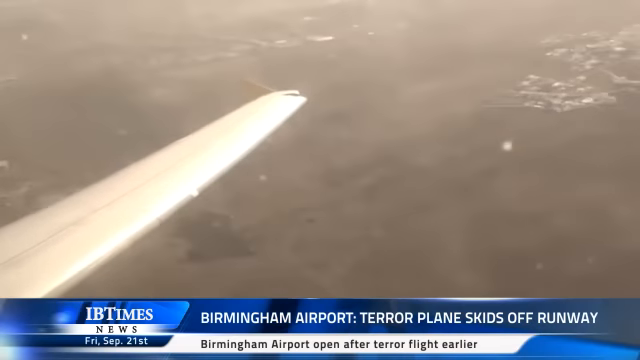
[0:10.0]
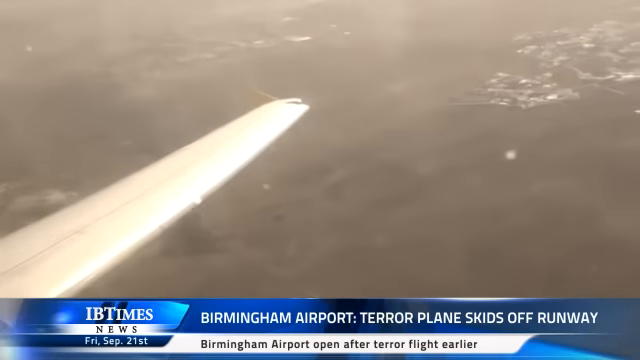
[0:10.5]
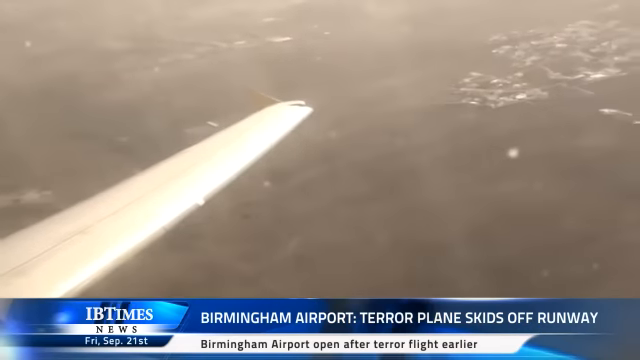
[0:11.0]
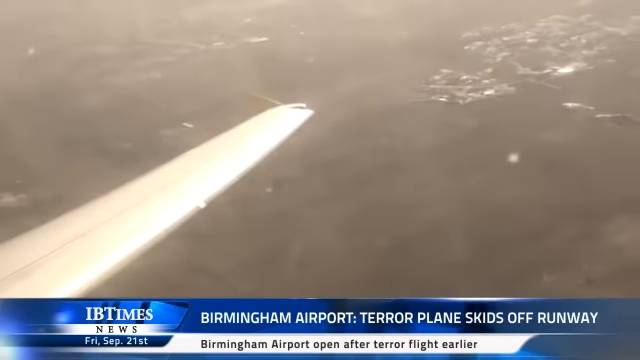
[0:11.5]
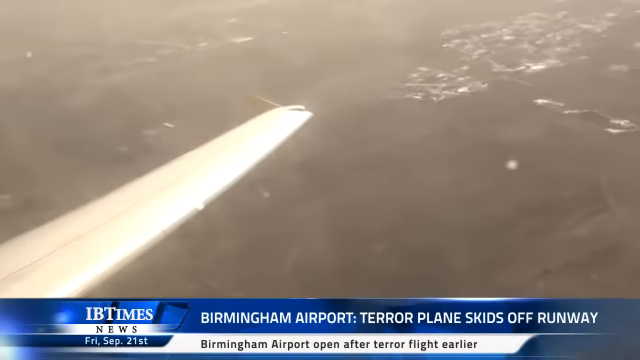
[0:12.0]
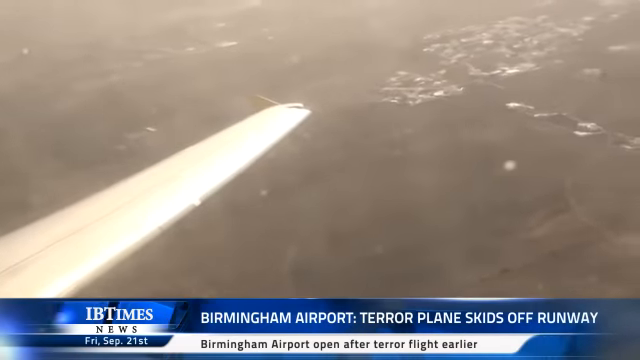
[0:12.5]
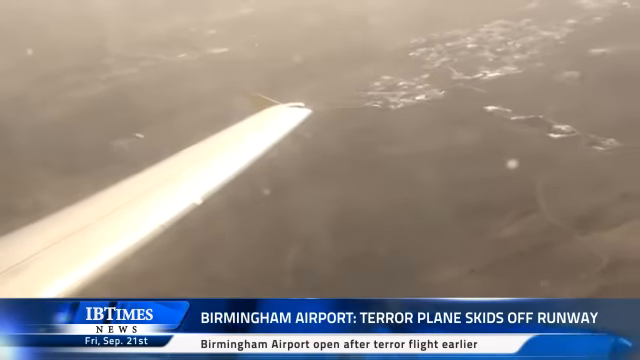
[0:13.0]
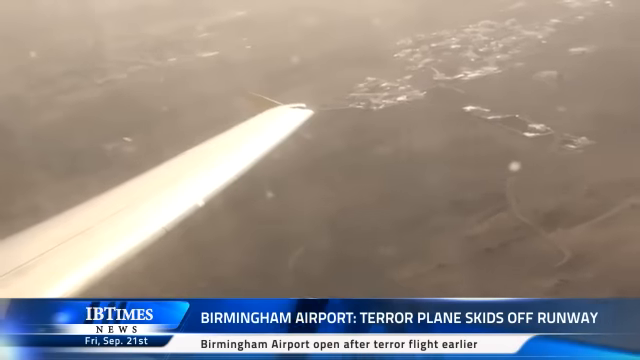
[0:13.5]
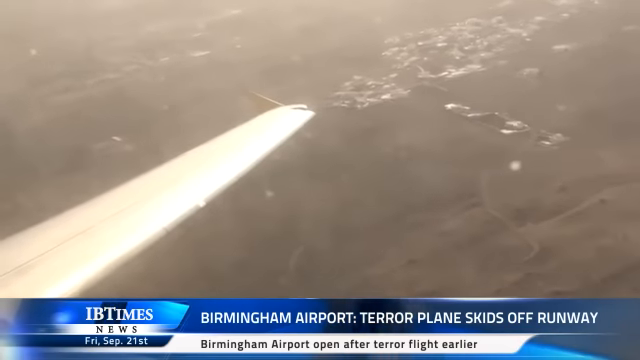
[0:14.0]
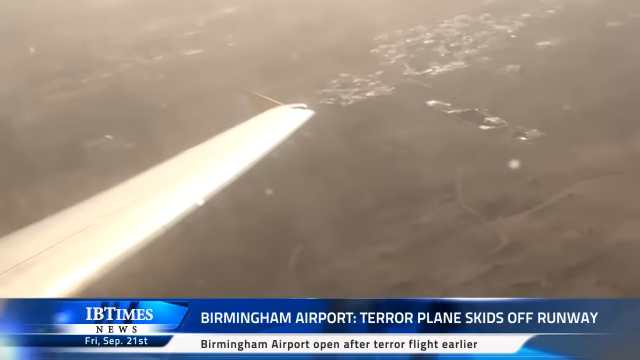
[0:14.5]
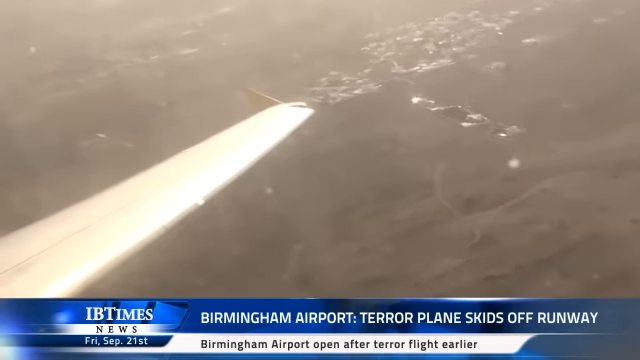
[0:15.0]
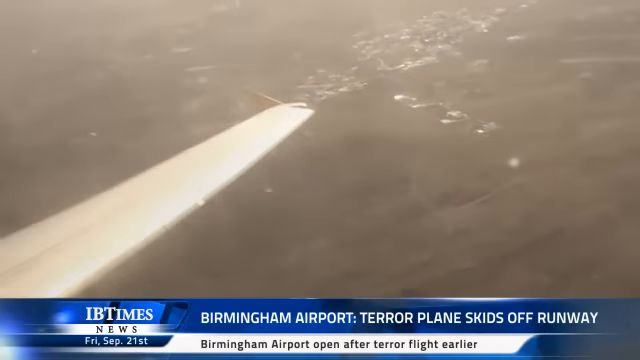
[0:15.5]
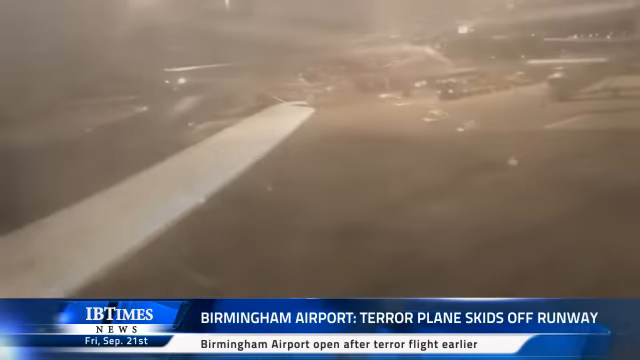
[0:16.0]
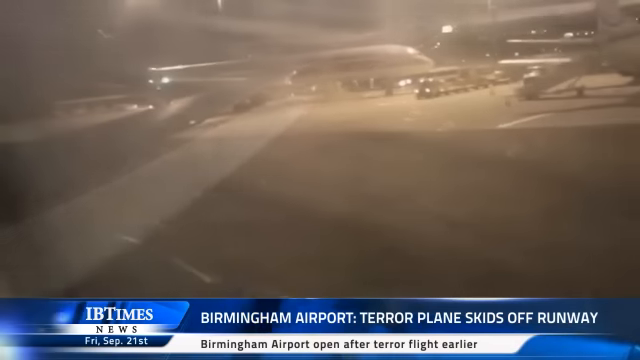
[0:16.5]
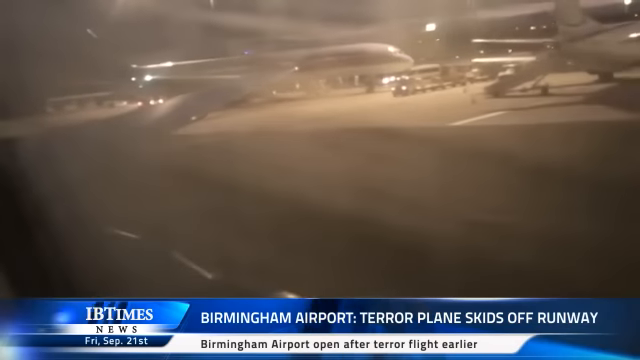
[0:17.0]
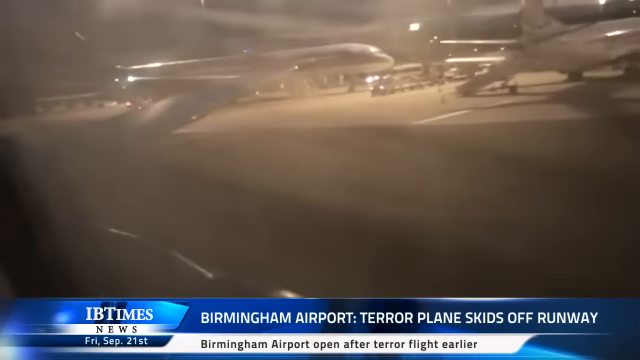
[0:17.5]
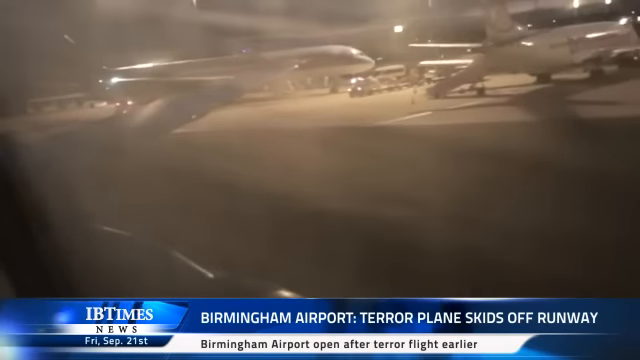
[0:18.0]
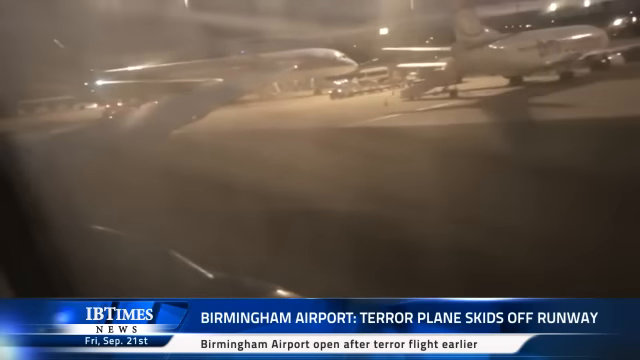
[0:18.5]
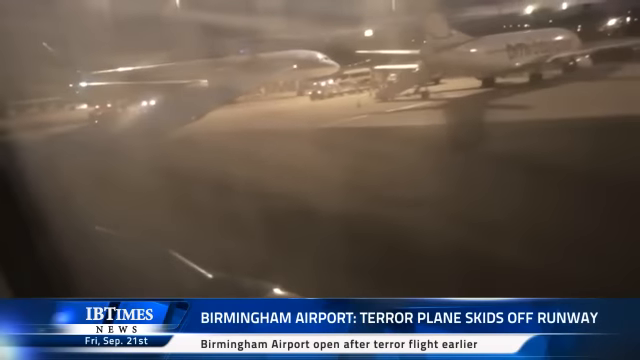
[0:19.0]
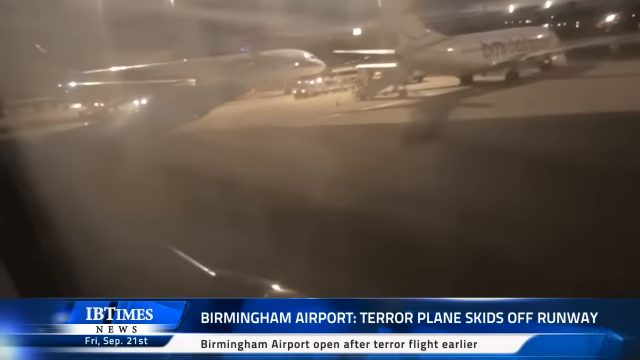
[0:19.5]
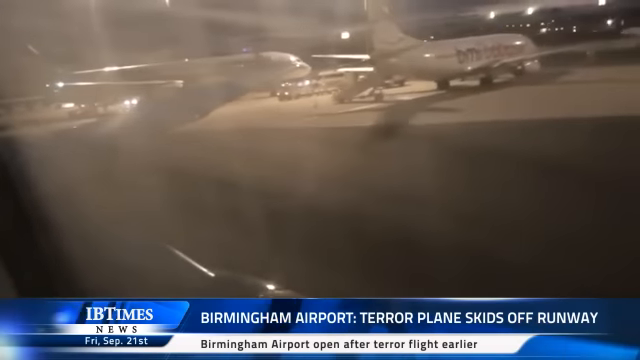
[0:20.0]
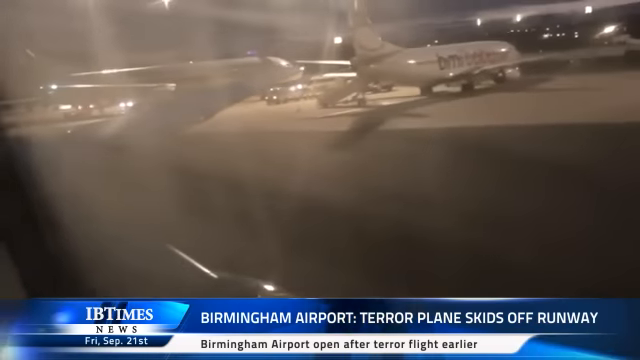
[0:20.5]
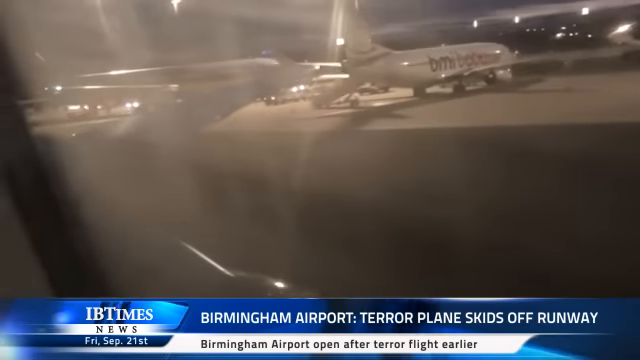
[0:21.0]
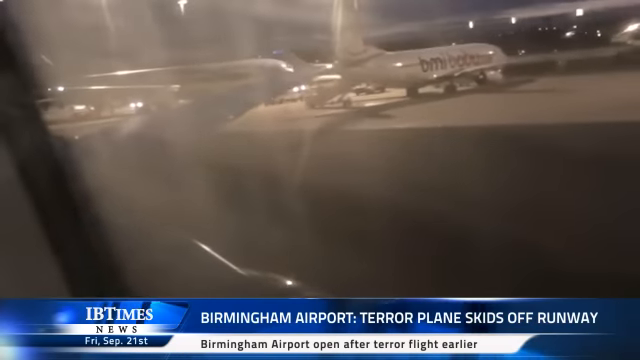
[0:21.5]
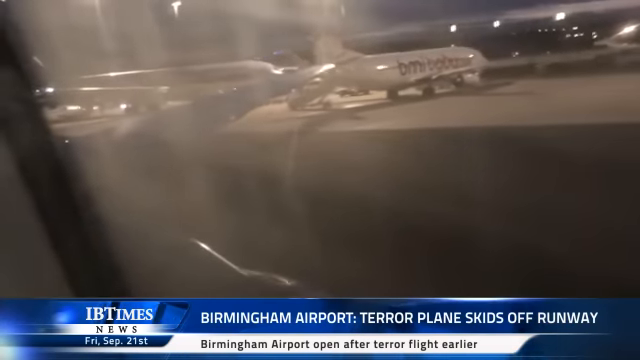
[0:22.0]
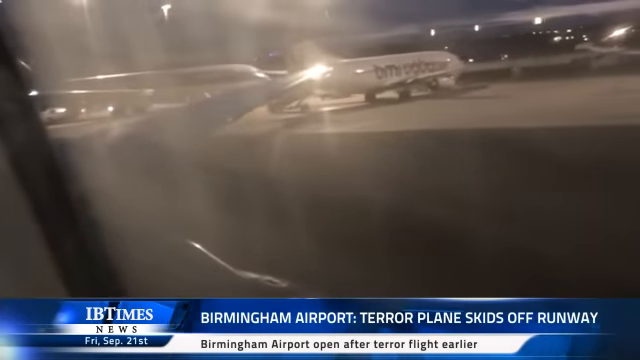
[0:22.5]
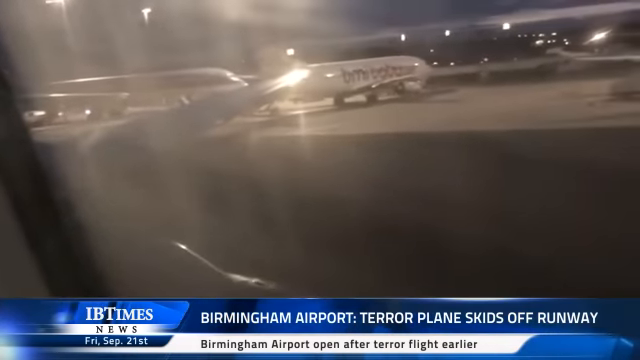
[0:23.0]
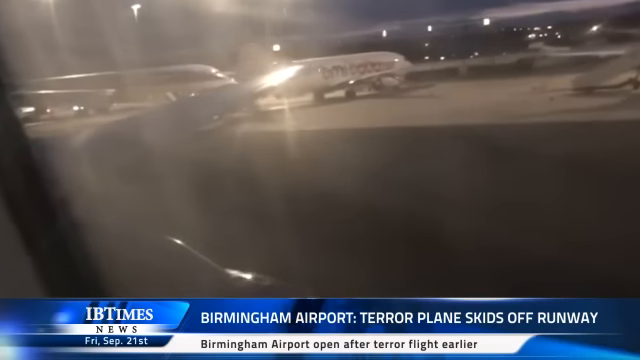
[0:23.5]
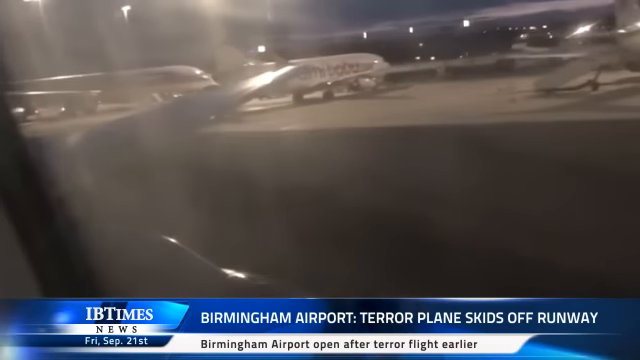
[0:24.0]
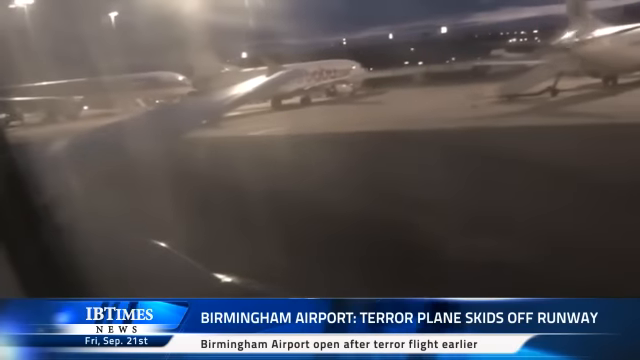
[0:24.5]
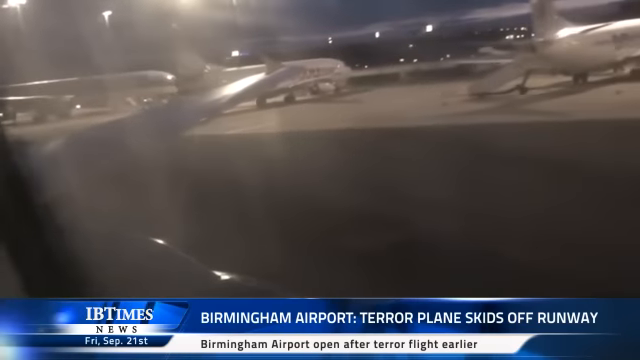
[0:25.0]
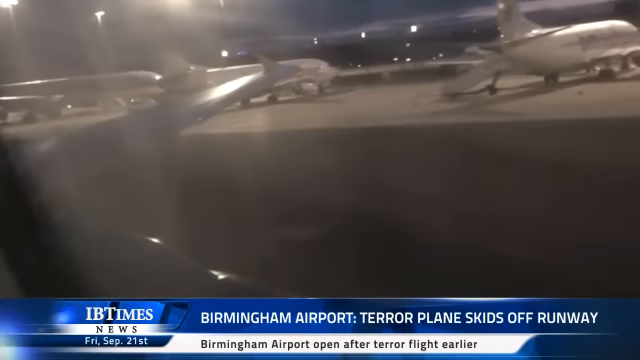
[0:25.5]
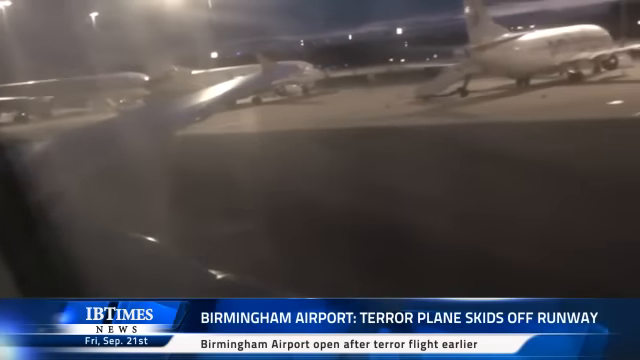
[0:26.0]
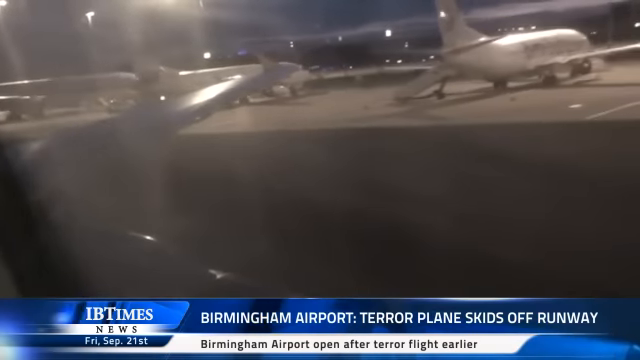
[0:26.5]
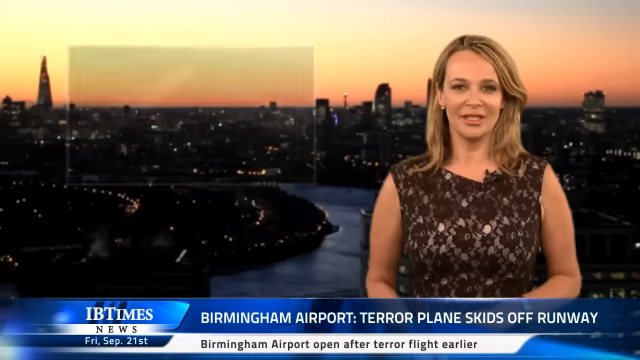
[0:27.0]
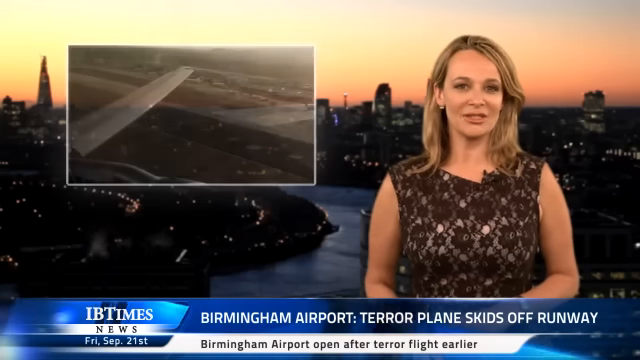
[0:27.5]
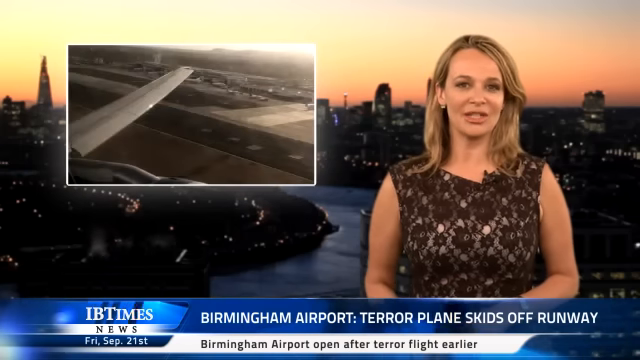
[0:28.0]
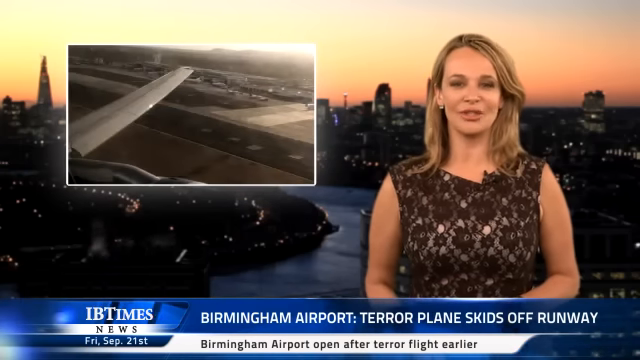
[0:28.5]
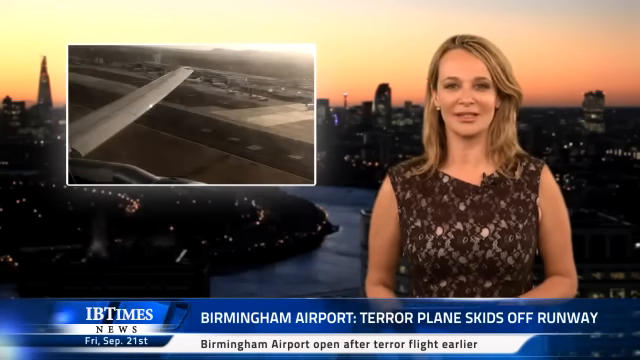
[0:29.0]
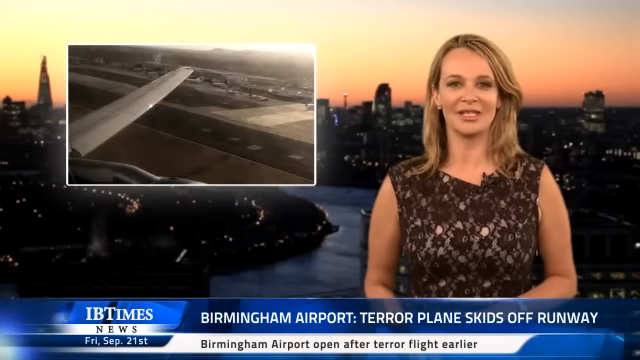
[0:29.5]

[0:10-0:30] An airplane wing is seen flying high in the sky over land below. The land below turns into a city area, and the airplane is then taxiing across a runway. Other airplanes are parked off the runway or the jetway, off to the side of the airport area. A passenger films out of a window as the jet taxis along the jetway, with the other airplanes parked on it. The shot switches to the newscaster, who talks on the right side of the screen. She has sandy blonde hair that goes down past her shoulders, wears a dark brown dress, and looks directly at the camera as she gives her report. The image on the left of the screen appears to show the plane flying through the air: the wing of the plane is up in the air, and below it, off to the left, the airport is visible down below, so it looks like the airplane is approaching the airport and getting ready to land. The banner at the bottom of the screen reads "Birmingham Airport terror plane skids off runway" and "Birmingham Airport opened after terror flight earlier," along with "IB Times News, Friday, September 21st."